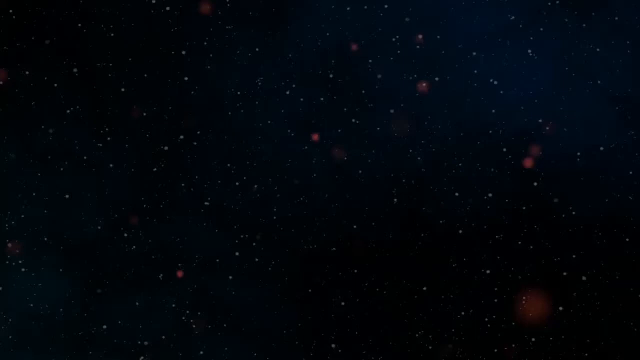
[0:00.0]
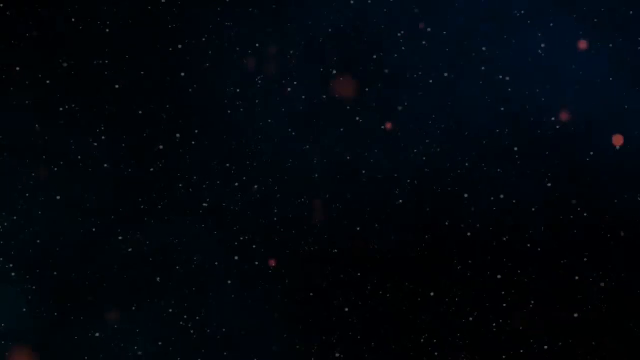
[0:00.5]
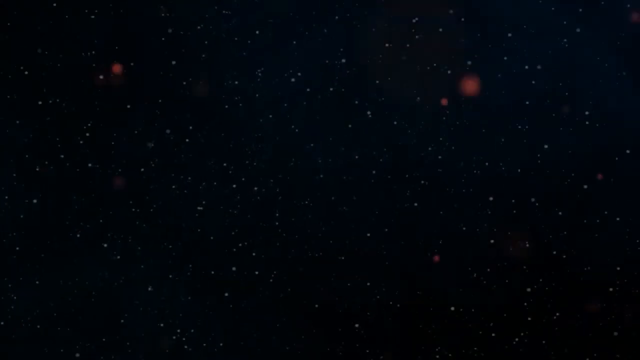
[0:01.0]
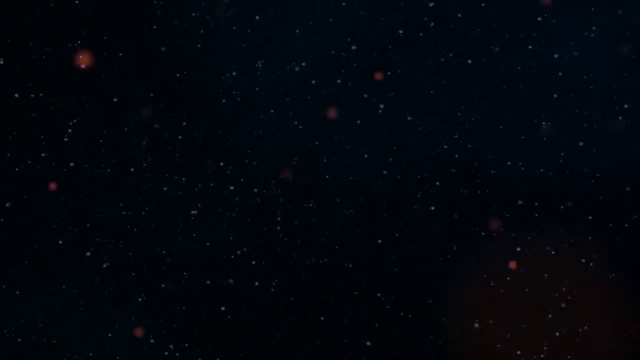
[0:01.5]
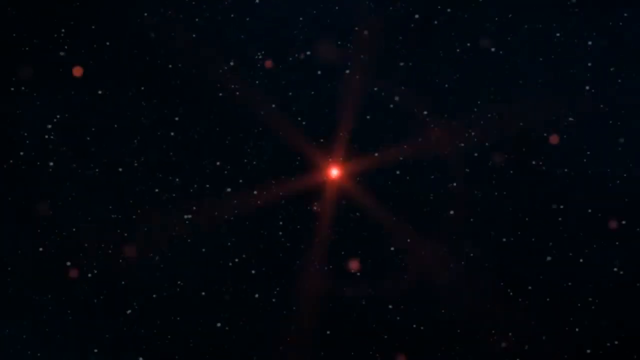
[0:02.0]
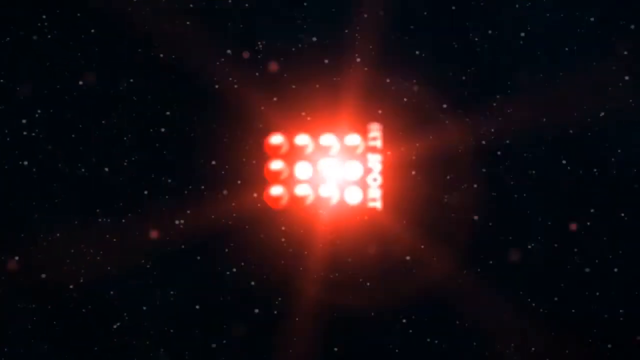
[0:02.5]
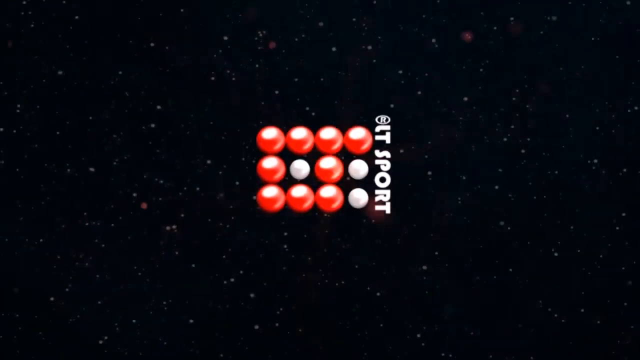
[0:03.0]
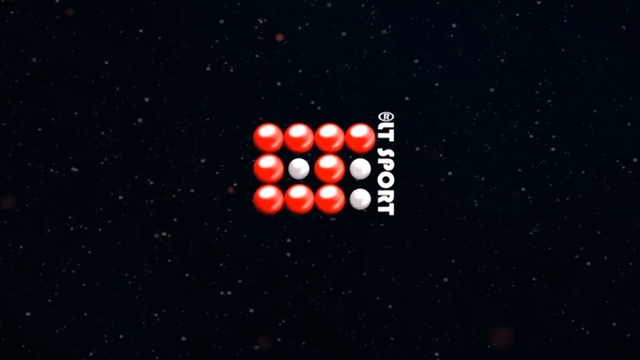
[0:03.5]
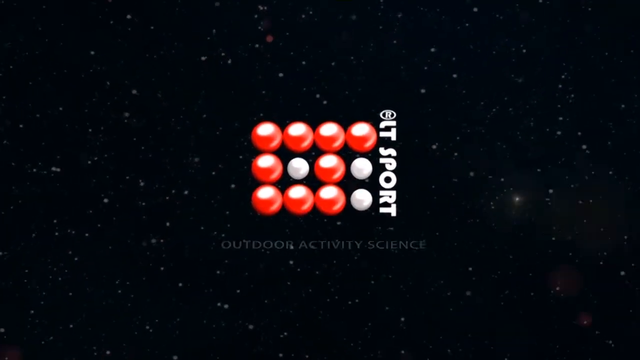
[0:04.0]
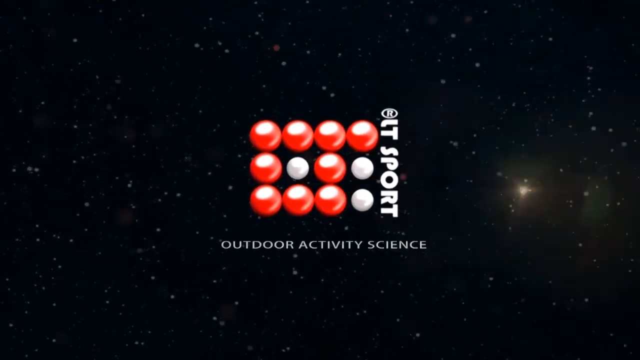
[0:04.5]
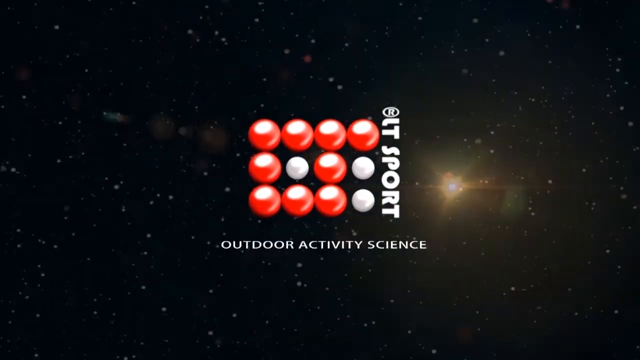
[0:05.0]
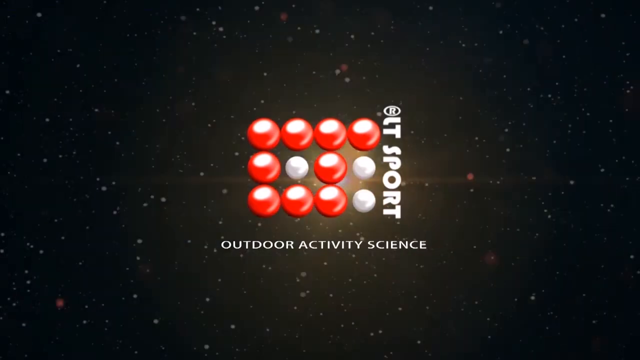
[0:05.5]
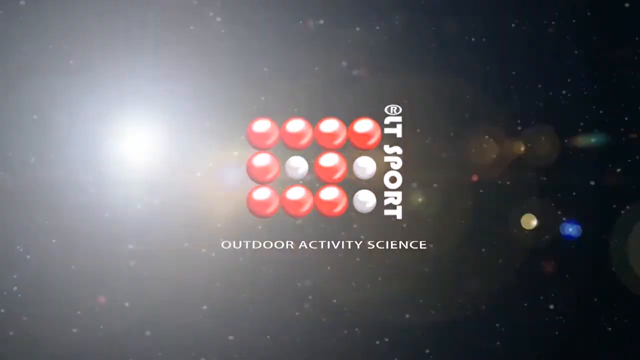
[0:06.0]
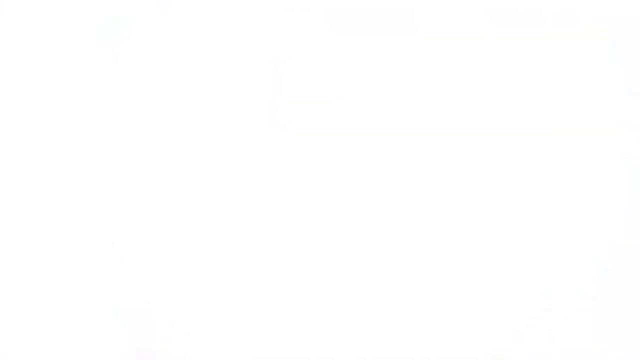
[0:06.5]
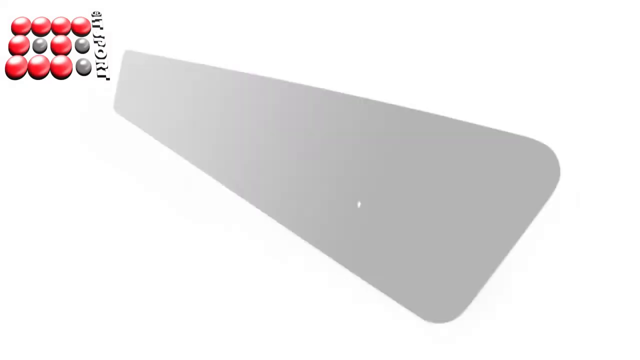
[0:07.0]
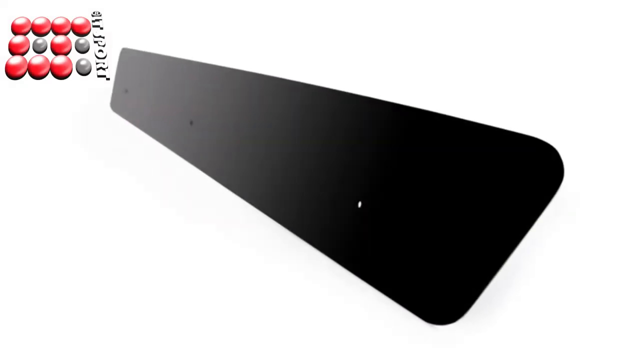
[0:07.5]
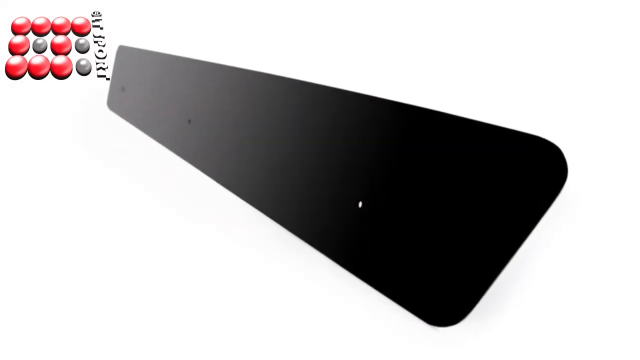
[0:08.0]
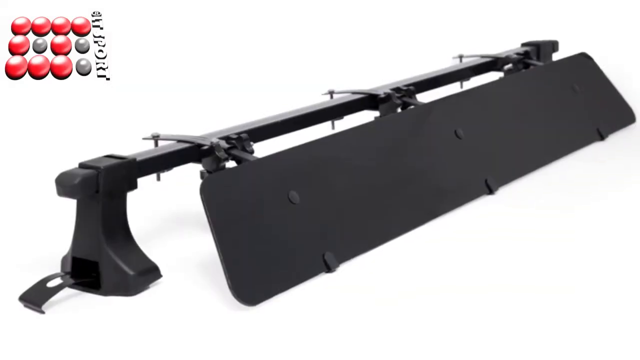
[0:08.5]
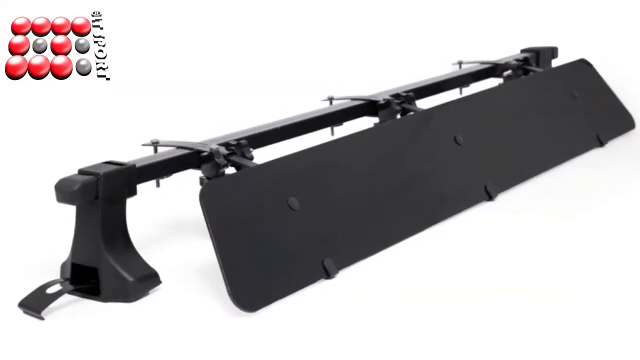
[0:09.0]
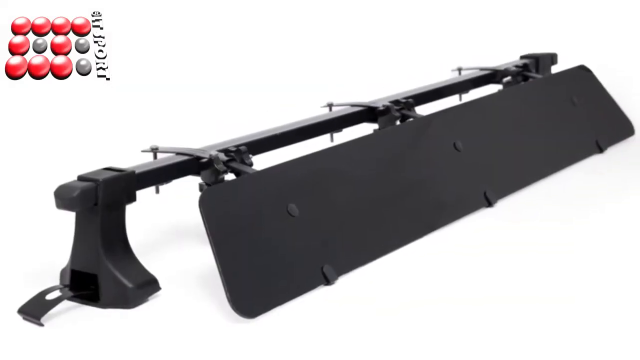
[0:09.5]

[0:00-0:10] Bubbles, star-like shapes and flashing lights appear. The video then shows a black bar that almost looks like a three-hole paper punch until it is shown on top of a white car. There are flashing lights, and the text "LT Sport Outdoor Activity Science" appears before a bright light obscures the rest. The bar on top of the car is shown very quickly. The rectangular black bar looks like some type of radar device, like a dish on a house, and appears to be mounted on the white car. There are some very bright lights. Behind the car there appears to be some type of building that looks a little different from a house.